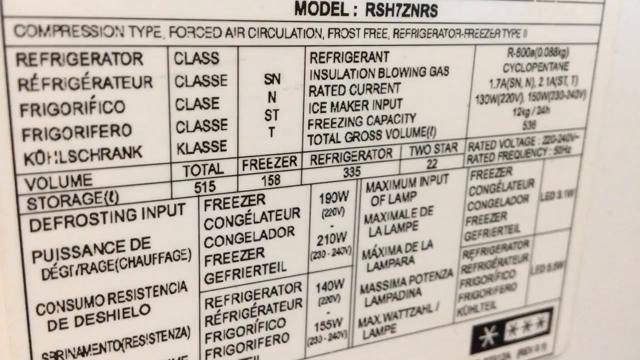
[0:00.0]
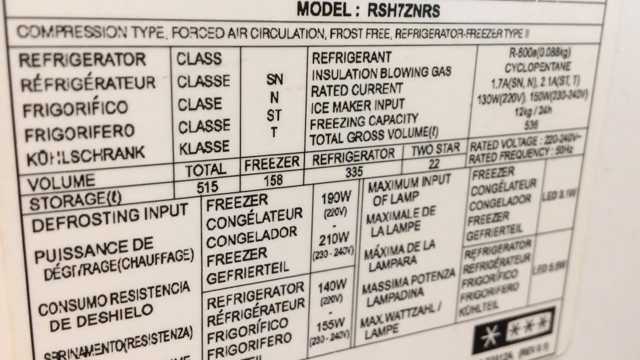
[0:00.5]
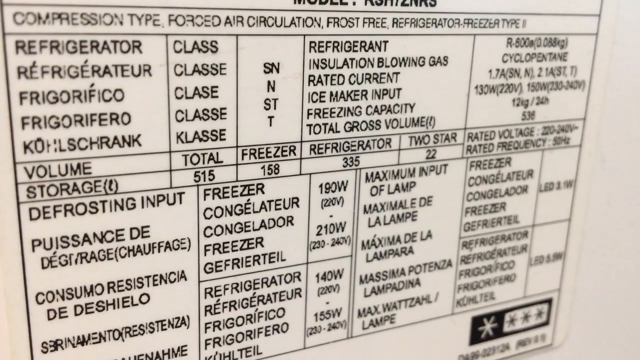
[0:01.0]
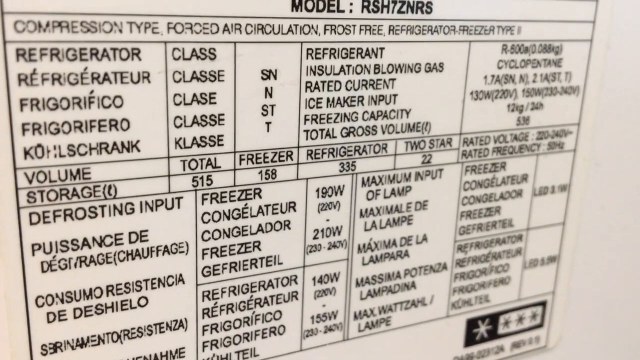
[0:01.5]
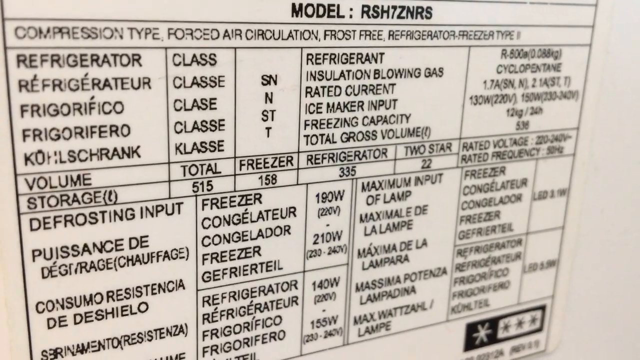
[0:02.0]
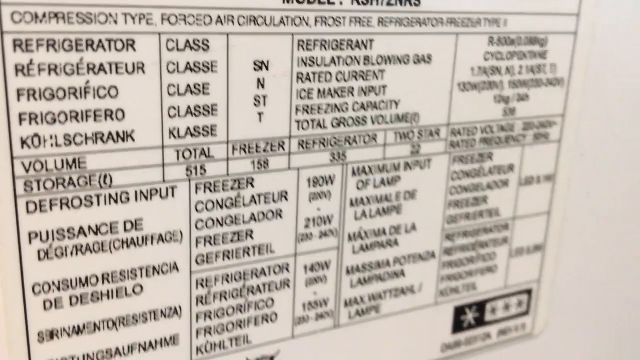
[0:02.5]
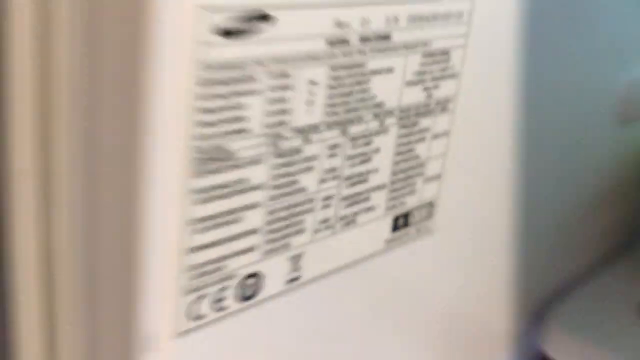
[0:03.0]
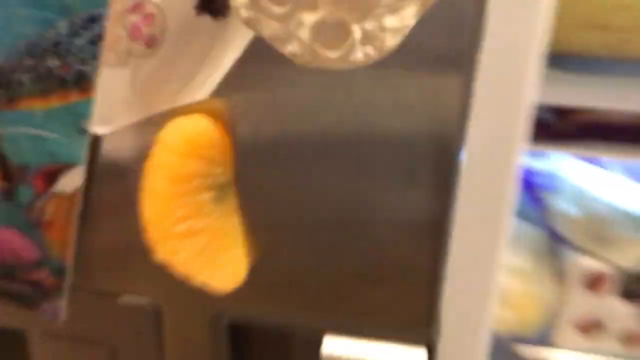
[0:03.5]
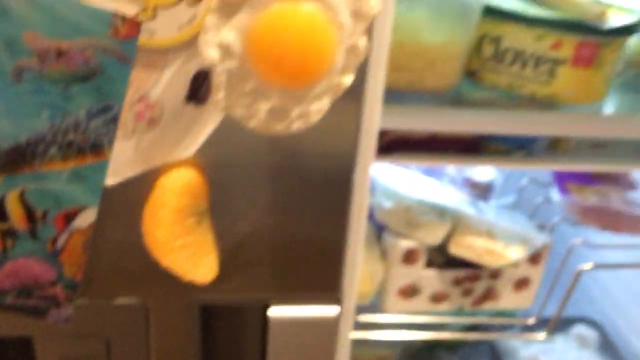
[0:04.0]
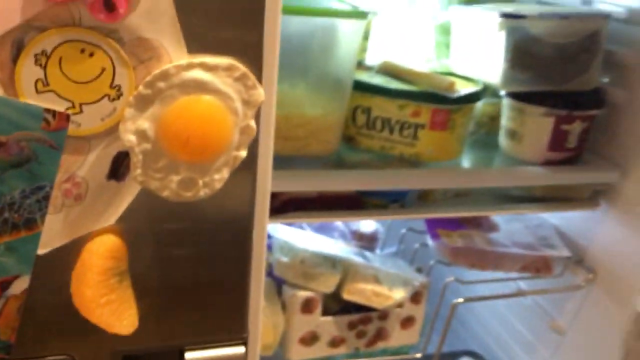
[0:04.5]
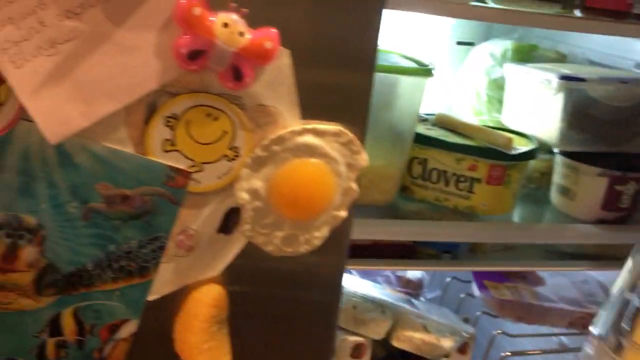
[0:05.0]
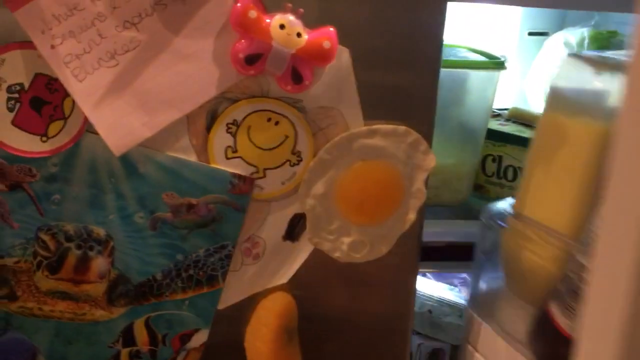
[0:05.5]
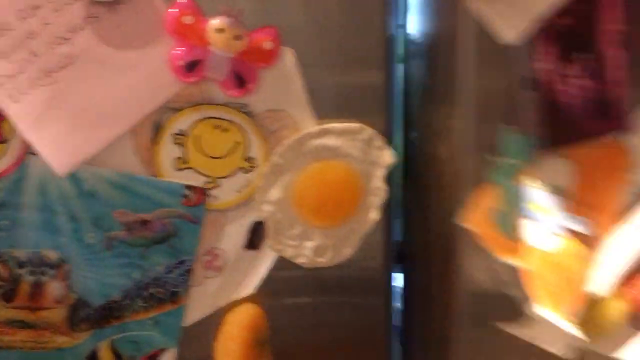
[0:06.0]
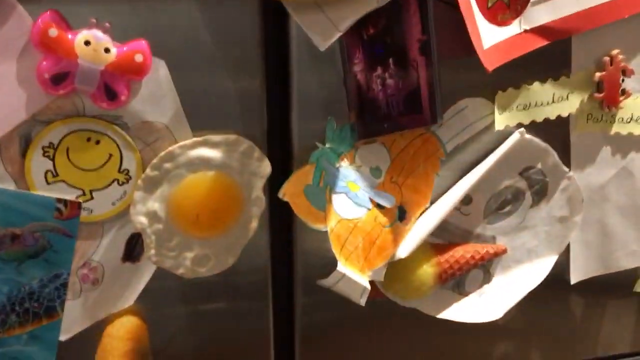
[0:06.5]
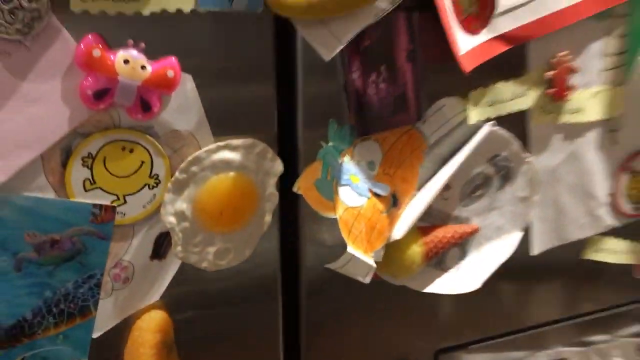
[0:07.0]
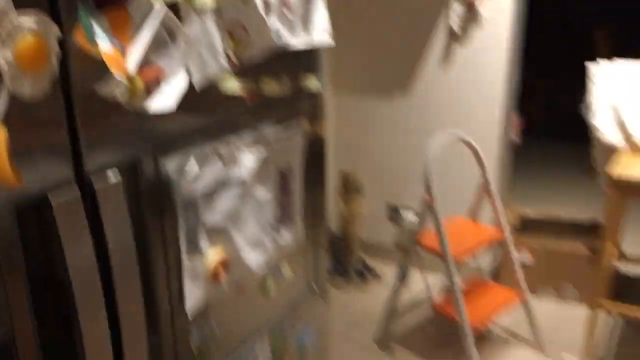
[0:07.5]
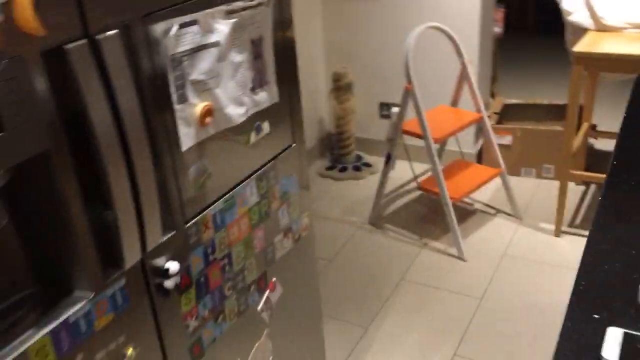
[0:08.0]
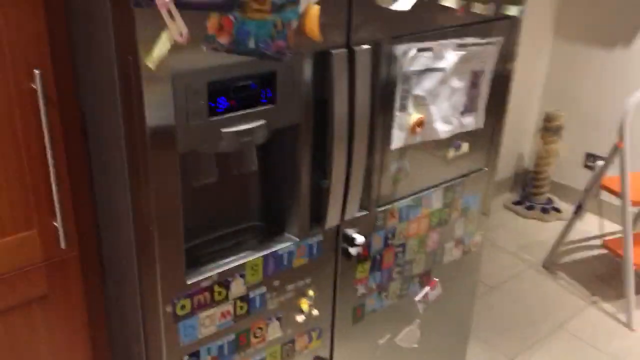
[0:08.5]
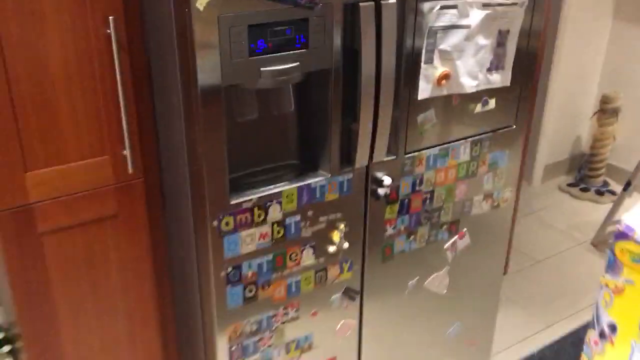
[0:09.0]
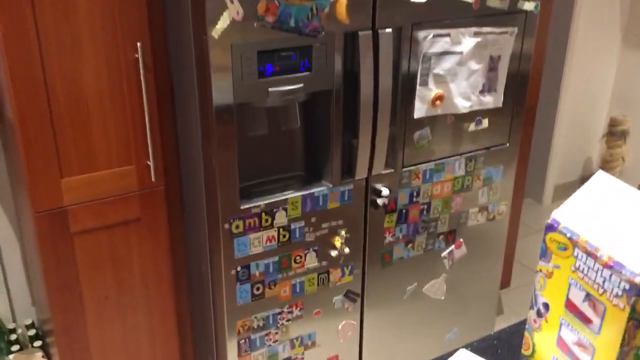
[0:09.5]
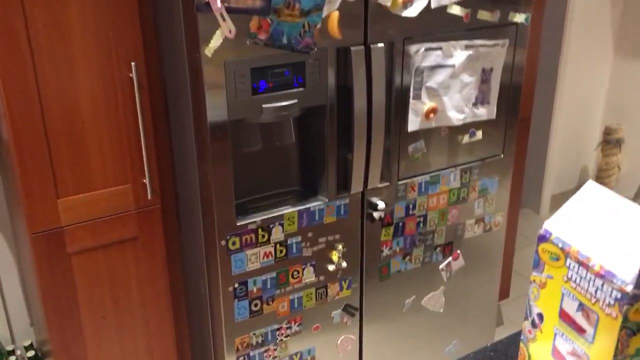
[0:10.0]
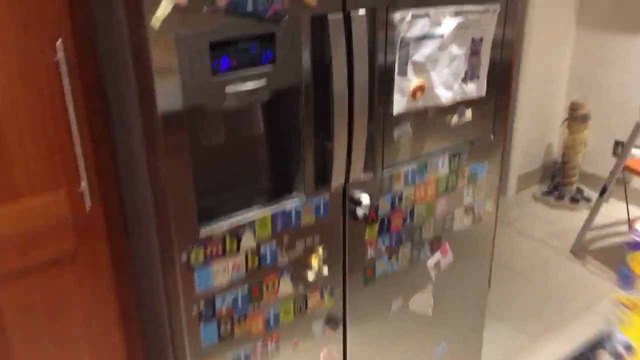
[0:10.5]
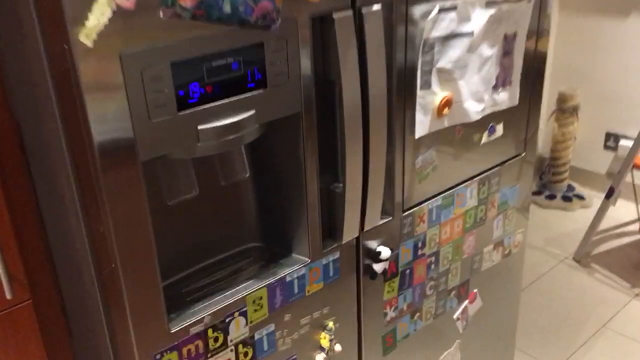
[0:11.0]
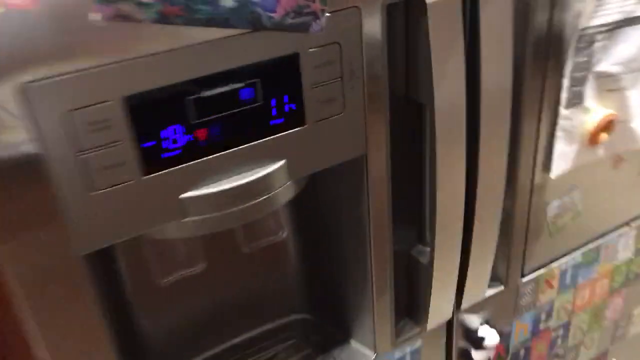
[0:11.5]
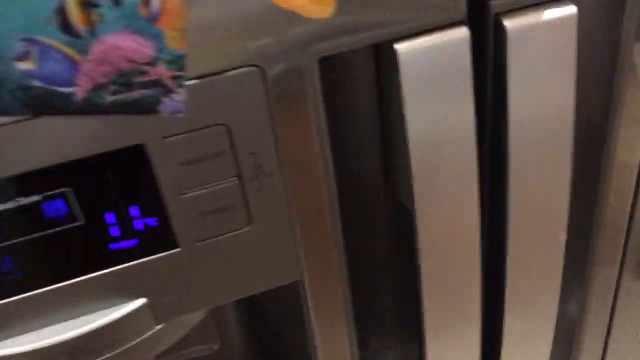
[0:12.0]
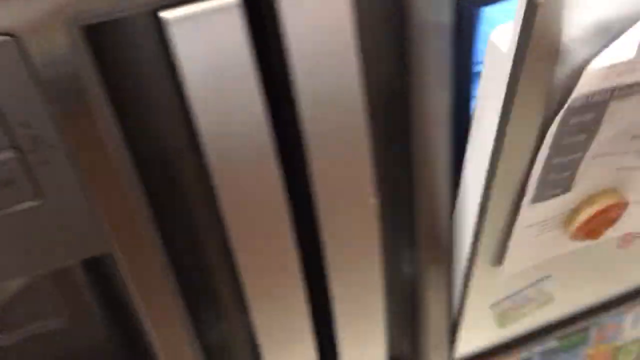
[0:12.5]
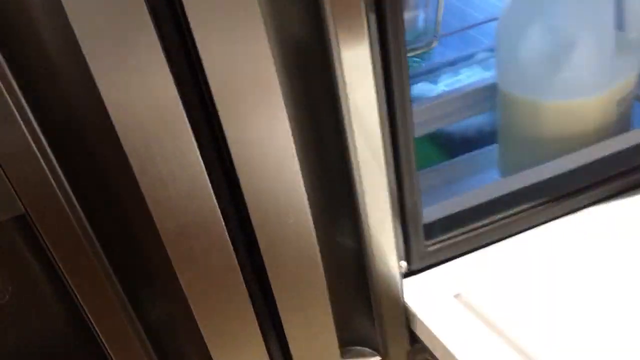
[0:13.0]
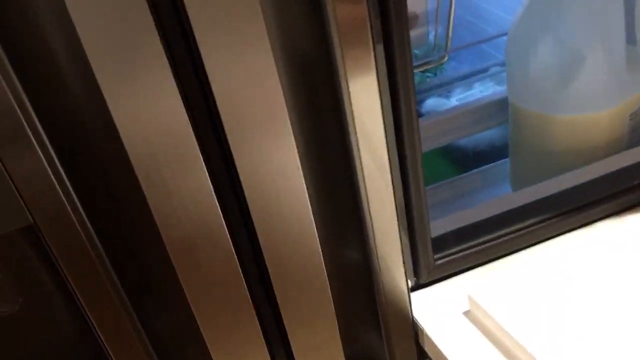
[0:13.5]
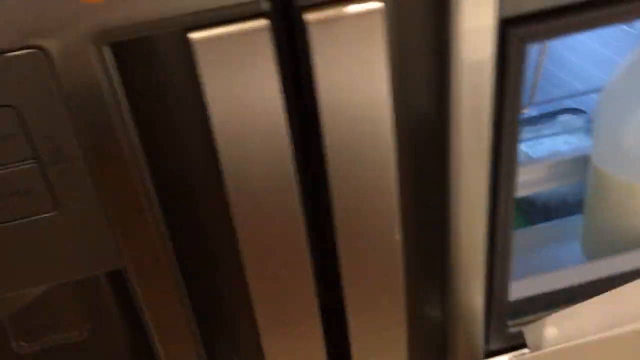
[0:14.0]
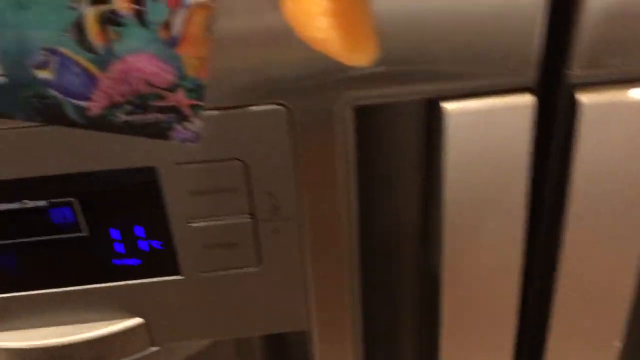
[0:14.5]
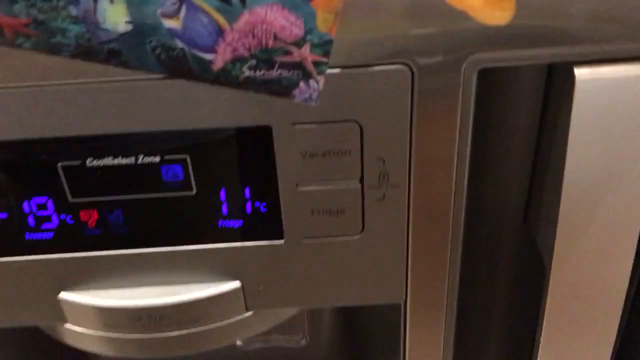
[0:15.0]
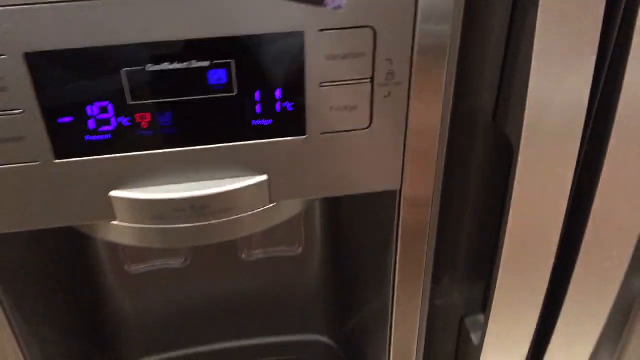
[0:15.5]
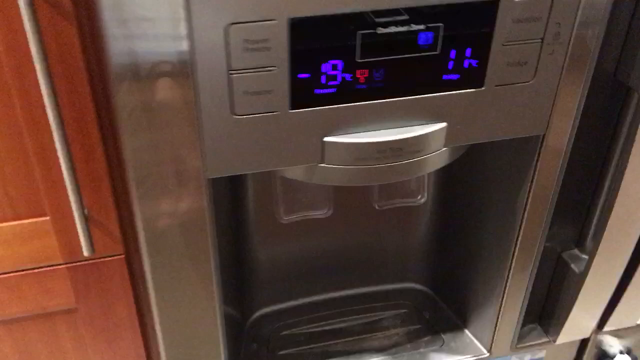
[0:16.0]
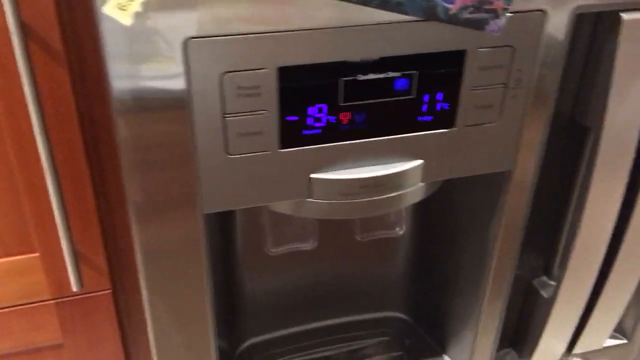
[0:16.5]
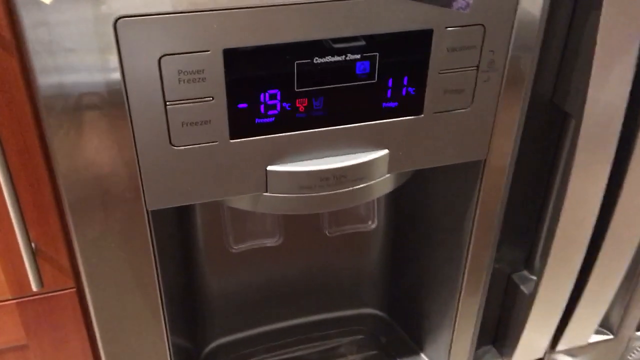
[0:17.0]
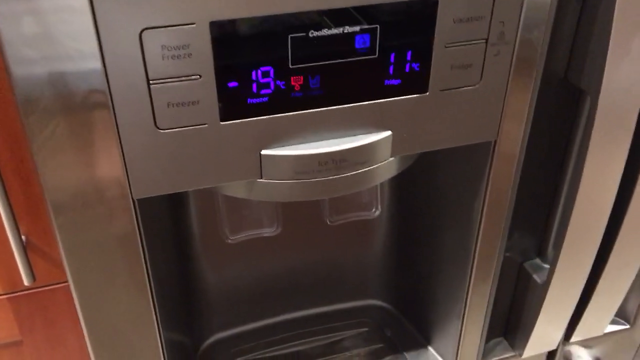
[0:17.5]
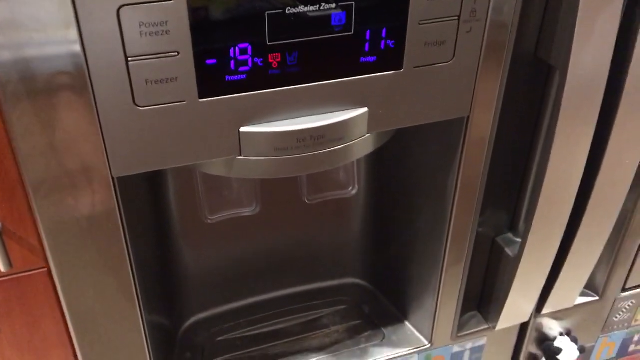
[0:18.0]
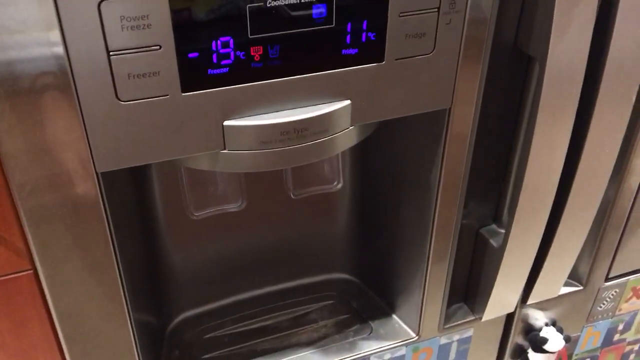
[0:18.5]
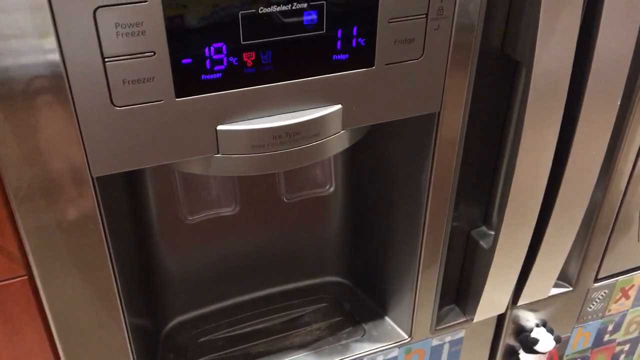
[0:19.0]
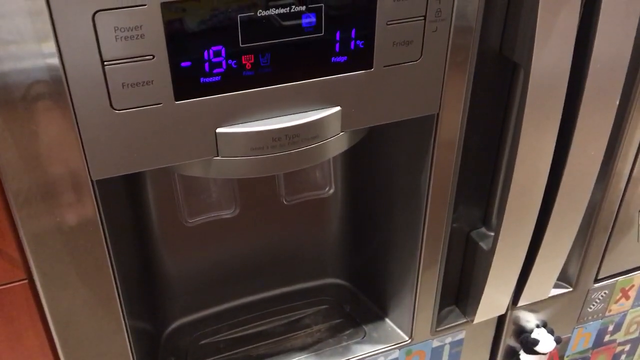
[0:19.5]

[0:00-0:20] The frame is slightly wider than it is tall and shows a label listing the specifics of a refrigerator. The label is white with black text and forms one large box subdivided into smaller boxes. At the top it reads "model rsh7znrs", and below that "compression type forced air circulation frost free refrigeration type 2". Below that on the left, "refrigerator class" is written in several languages, about five. A box to the right of that reads "refrigerant insulation blowing gas rated current ice maker input freezing capacity total gross volume". Further on, the label gives the amount of storage for the total versus the freezer and the refrigerator, and another entry says "two star". Below that is the defrosting input. The view then zooms out from the label to the outside of the refrigerator door, the right door closes, and many magnets can be seen on it.